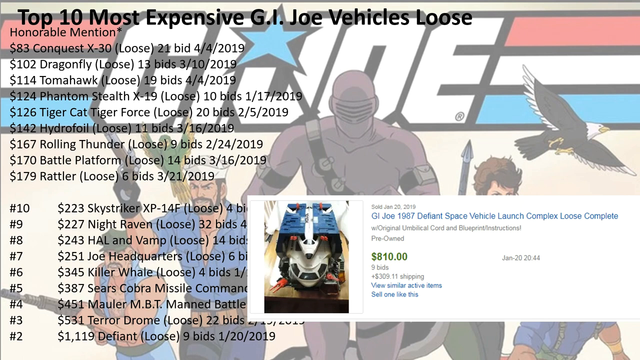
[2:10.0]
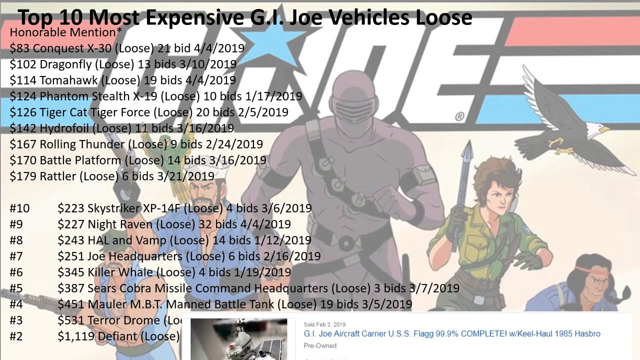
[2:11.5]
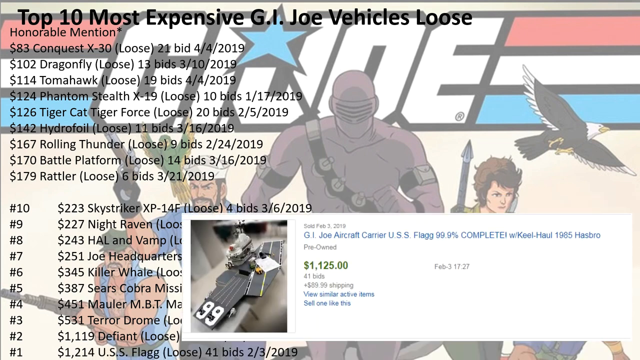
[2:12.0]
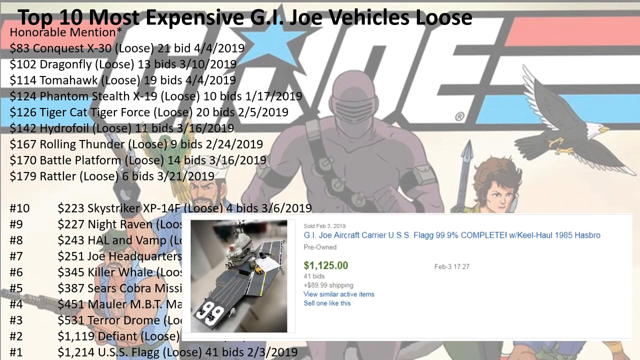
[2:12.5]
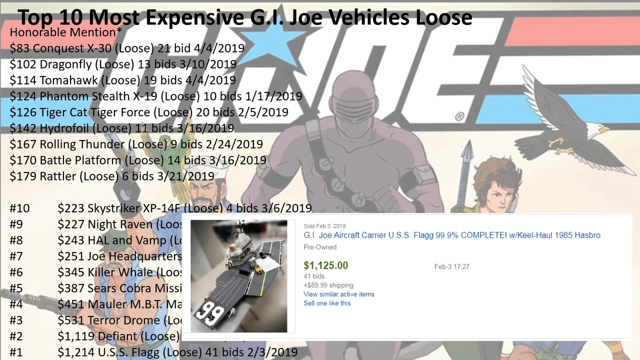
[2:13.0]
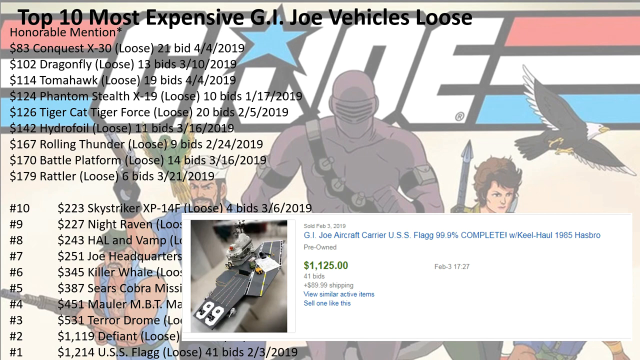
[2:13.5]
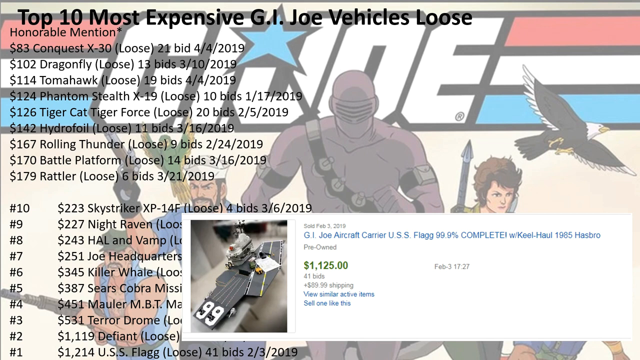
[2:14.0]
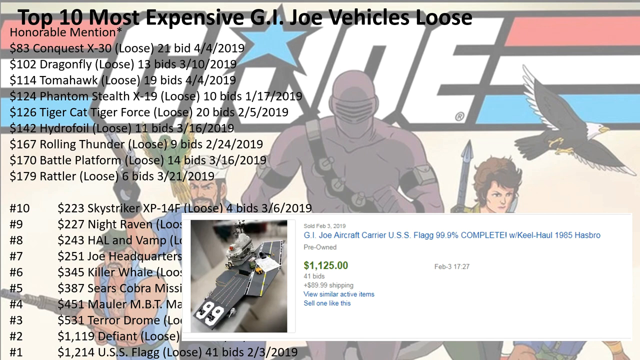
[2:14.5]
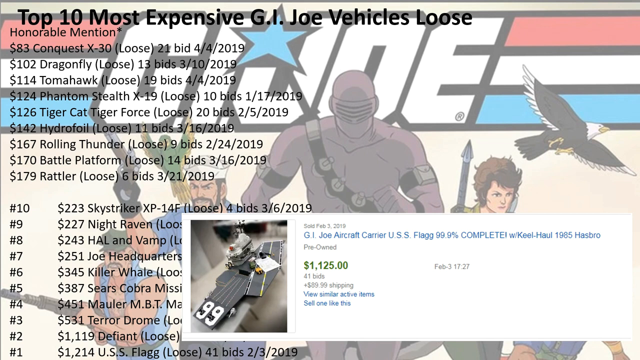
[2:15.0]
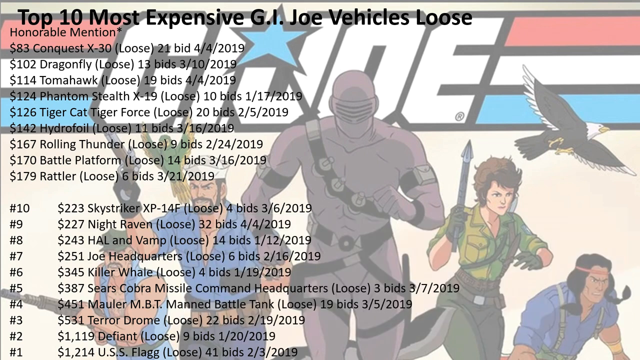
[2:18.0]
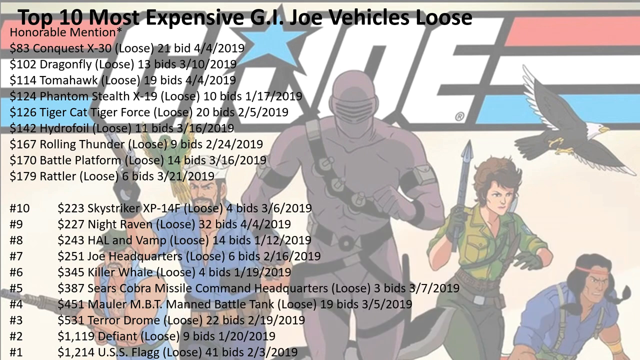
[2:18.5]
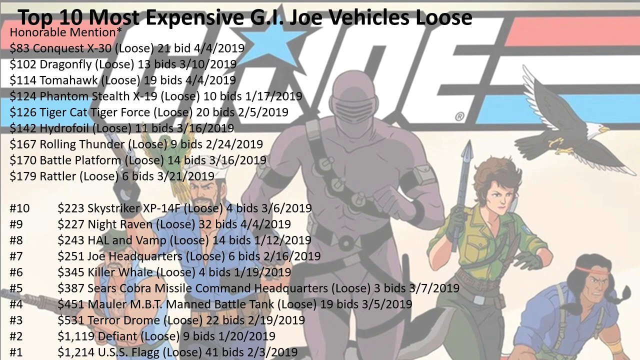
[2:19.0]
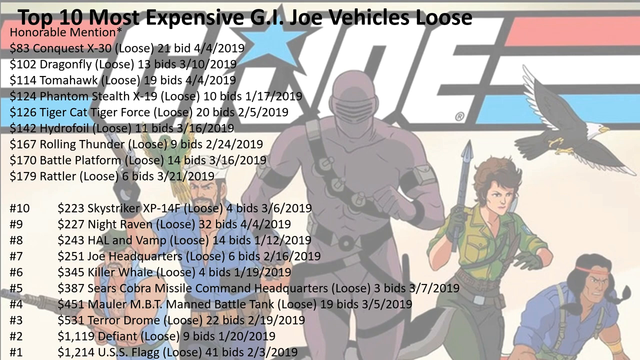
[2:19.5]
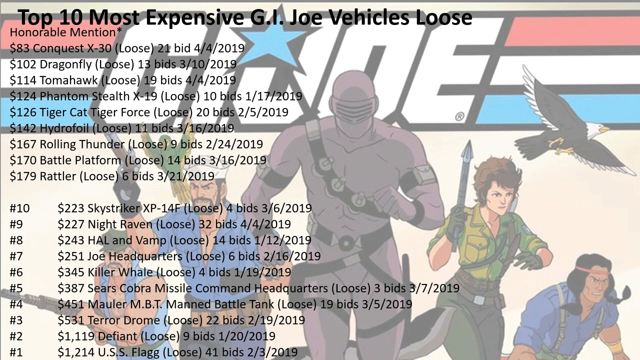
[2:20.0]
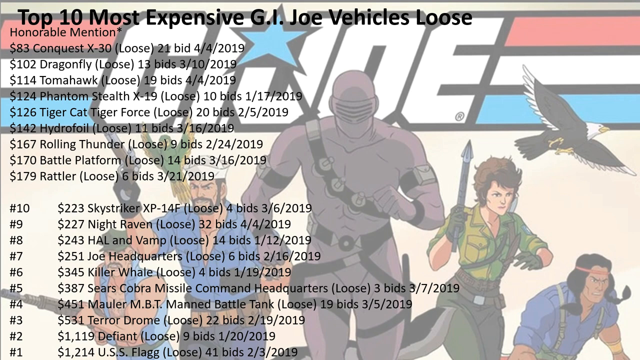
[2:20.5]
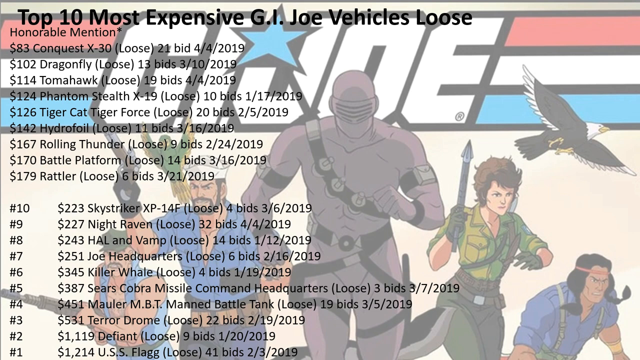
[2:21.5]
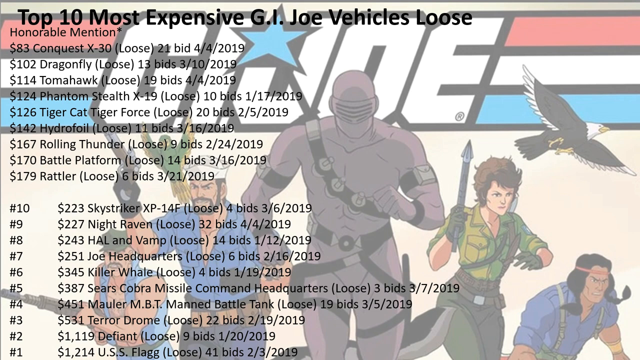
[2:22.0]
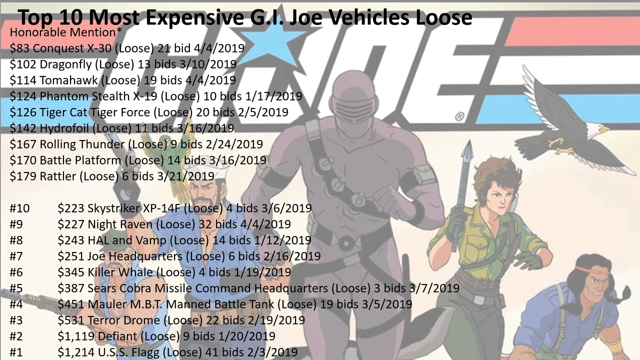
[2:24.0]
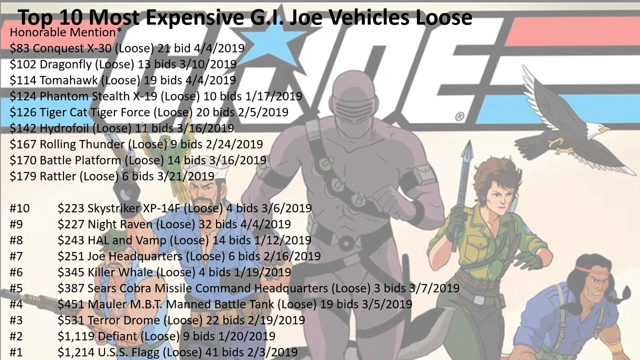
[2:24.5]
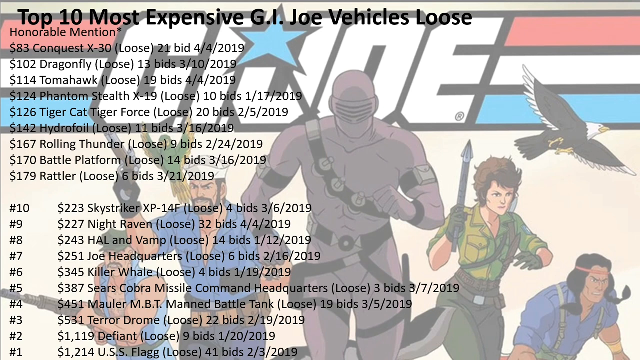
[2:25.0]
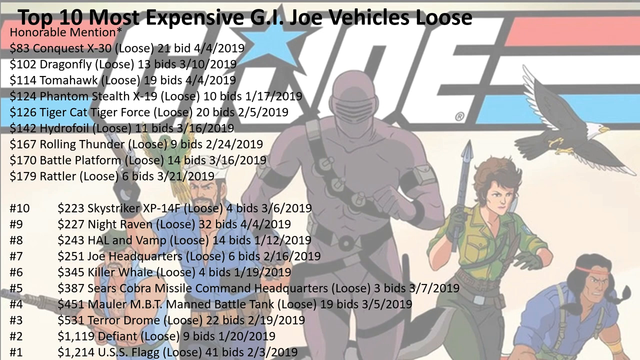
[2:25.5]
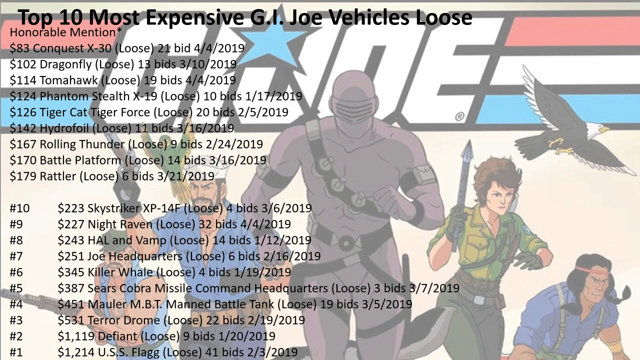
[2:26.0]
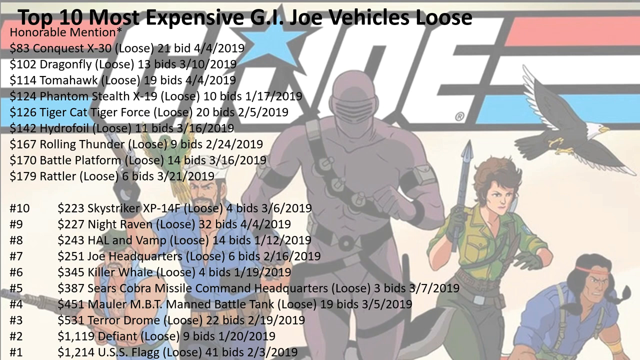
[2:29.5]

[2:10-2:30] The number 2 spot is still shown at first, and after a moment the number 1 spot appears: the G.I. Joe Aircraft Carrier, the USS Flagg, for $1214, with 41 bids, sold on February 3, 2019. The listing title reads "G.I. Joe Aircraft Carrier USS Flag 99.9% complete ! with Keel Hall 1985 HB", with a price of $1125 and $89.99 in shipping. The listing then disappears from the right side of the frame, and the full list is shown with every spot: the honorable mentions at the top and the top 10 listed right below, from number 10, the Sky Striker XP-14F, to the last one, the USS Flagg. Nothing on screen changes for a while. The sale dates appear on the right side of every listing, and the background with the G.I. Joe logo is still visible.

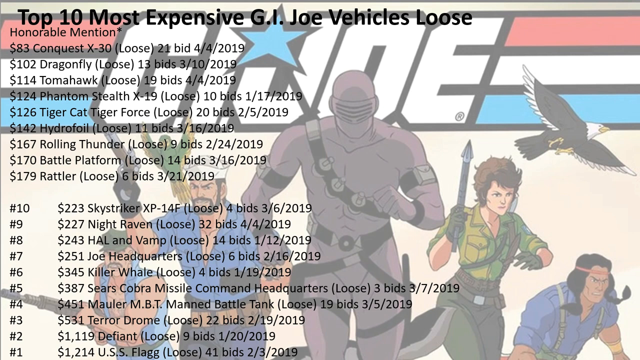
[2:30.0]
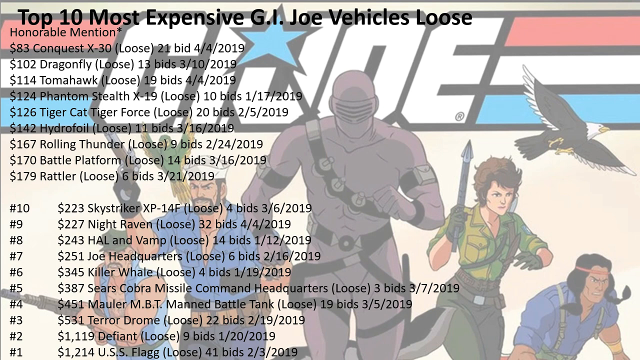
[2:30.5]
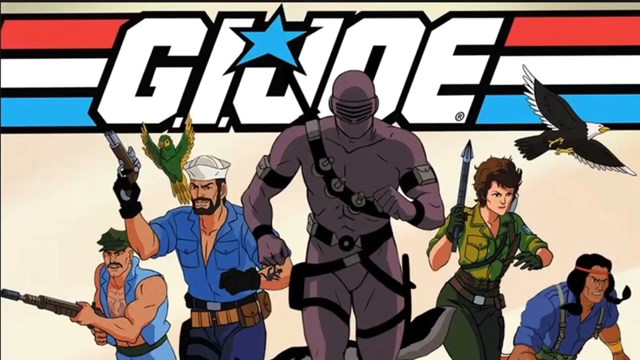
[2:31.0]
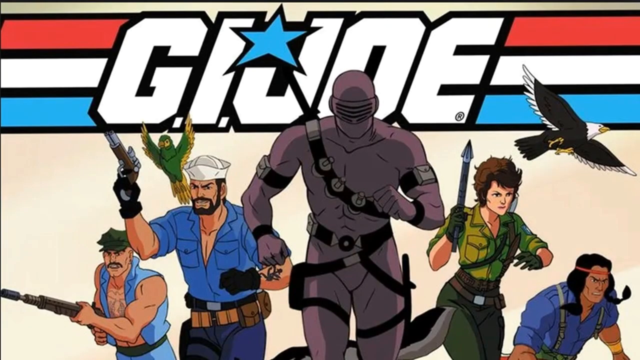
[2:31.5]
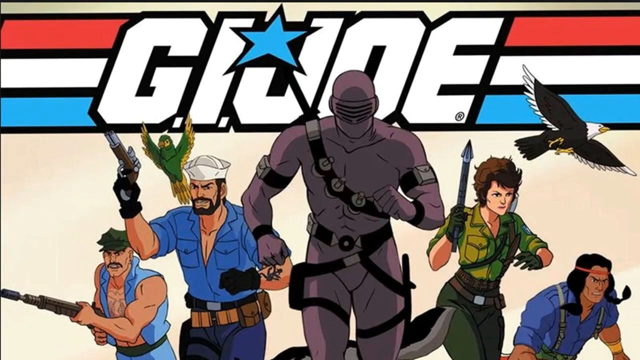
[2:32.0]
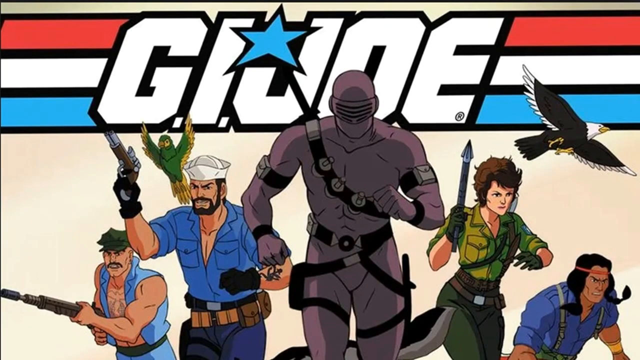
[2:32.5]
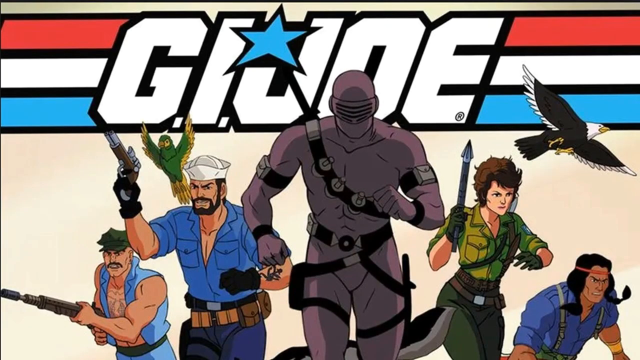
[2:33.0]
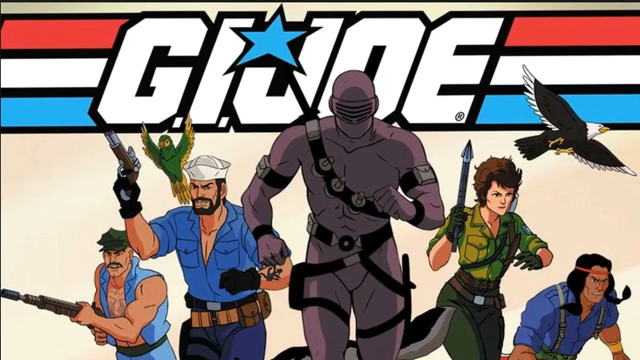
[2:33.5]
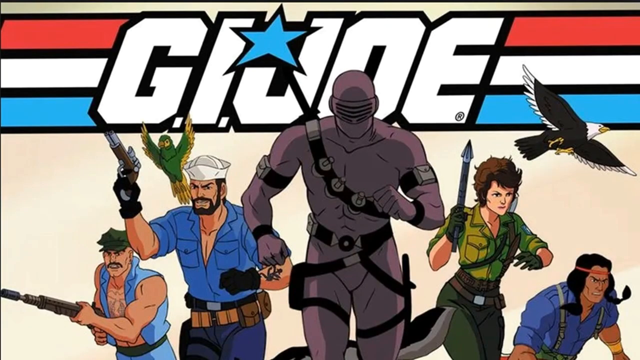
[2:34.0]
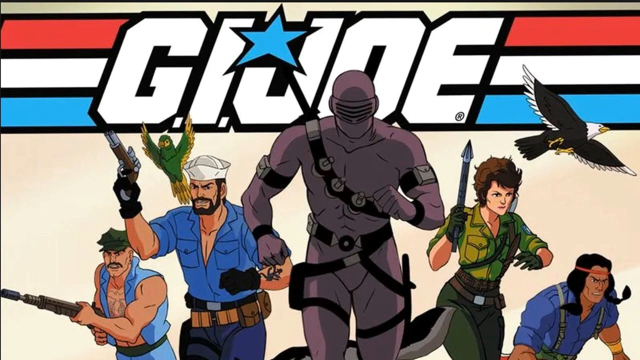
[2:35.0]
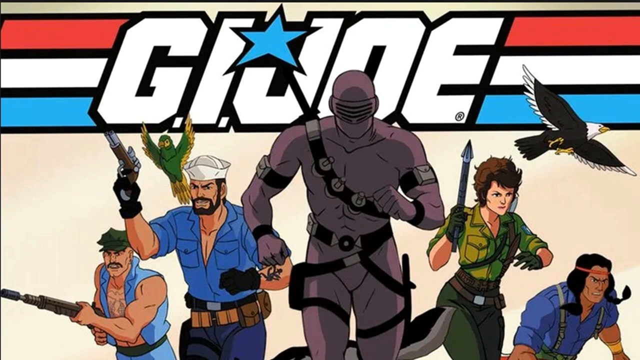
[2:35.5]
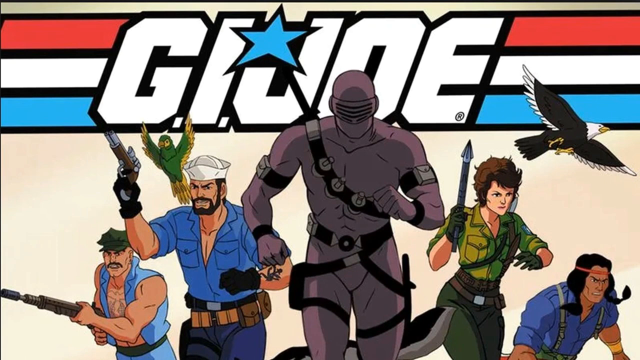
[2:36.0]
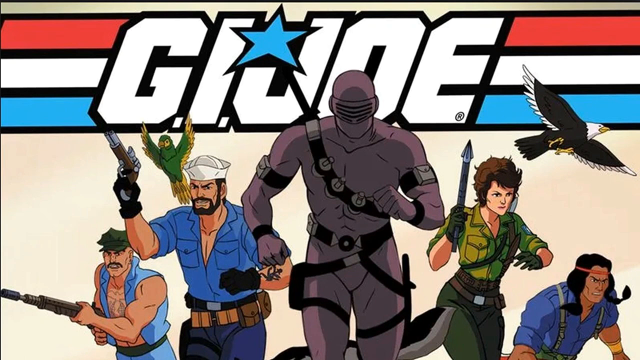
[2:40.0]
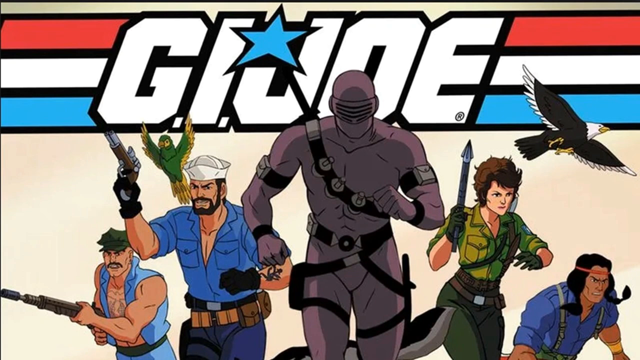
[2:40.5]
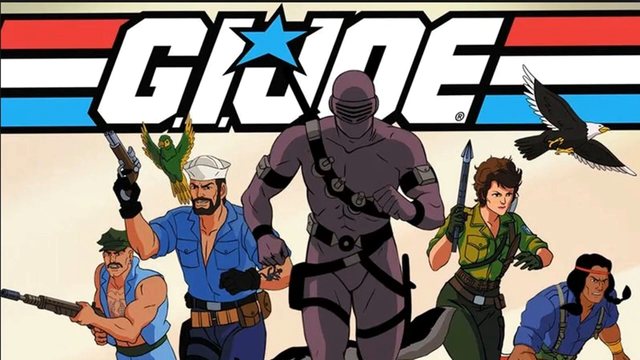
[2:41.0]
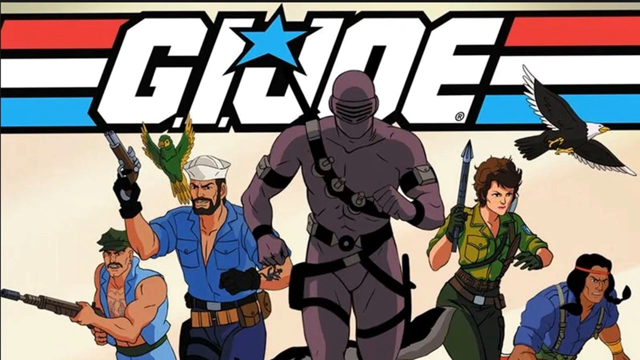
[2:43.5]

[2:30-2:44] The roughly 20 entries disappear, leaving the G.I. Joe logo with the people shown under it. The man on the left wears an open, light blue shirt that shows his tattooed chest, holds a big gun with a long muzzle, has a moustache and no beard, appears to be bald, and wears a green hat. Next to him is a man with a parrot on his shoulder and a smaller gun; he has a beard, a moustache and hair on his head, a tattoo on his left arm, blue jeans and a belt. In the middle is a man in a futuristic suit with none of his skin visible, wearing an odd pair of goggles over his eyes. He has many belts, some holding equipment with handles, straps with pockets on his arms, and straps on his legs that hold weapons. Next to him, on his left side and on the right side of the screen, is a woman in a green skirt with darker green pants and gloves, holding something like a harpoon in her right hand. She has many belts and probably another weapon on her back that cannot be seen clearly, and her brunette hair is not very long. Next to her is a man, seemingly Native American, with long hair on the right and left sides of his head, a decorative strap on his head, and a blue shirt with straps running from his pants up to his shoulders.